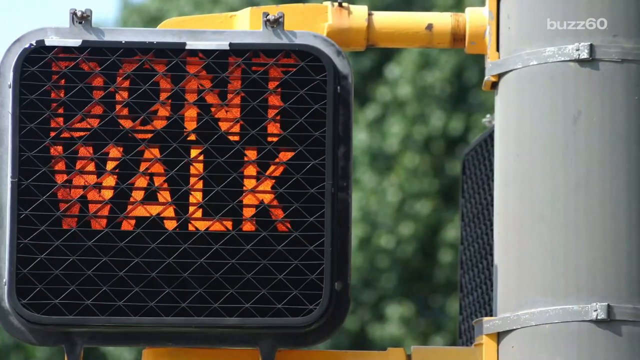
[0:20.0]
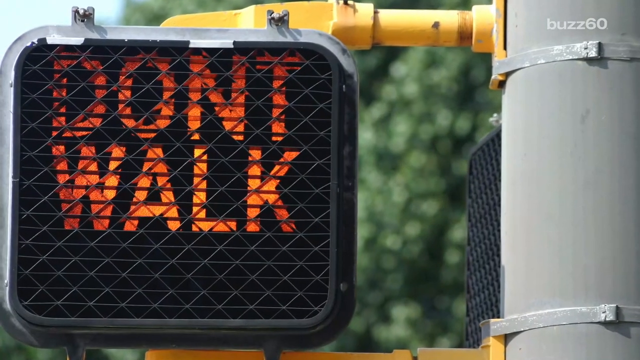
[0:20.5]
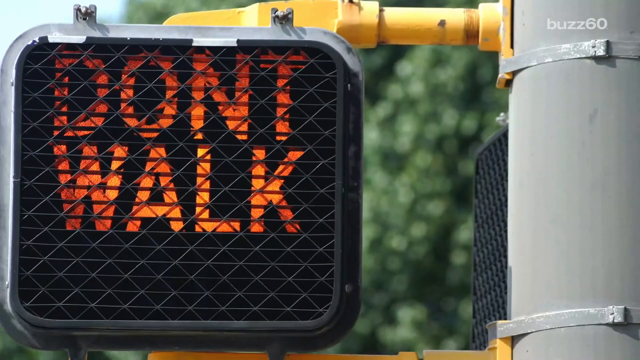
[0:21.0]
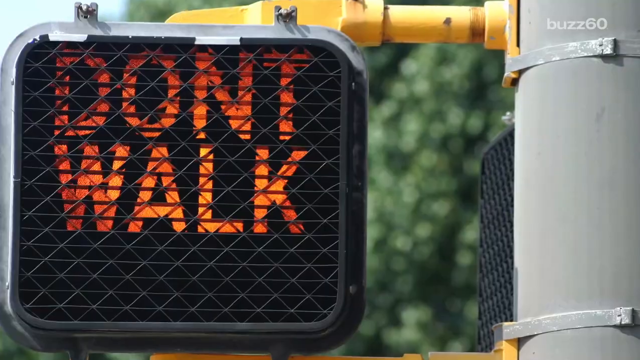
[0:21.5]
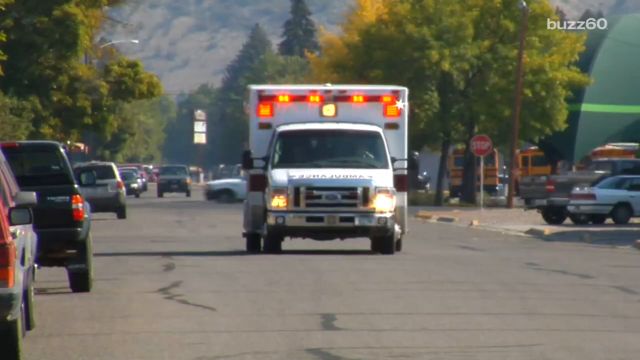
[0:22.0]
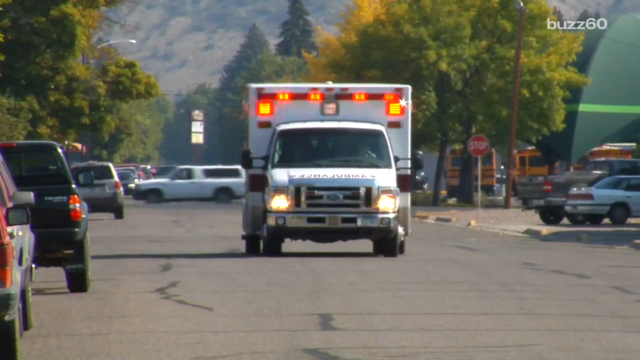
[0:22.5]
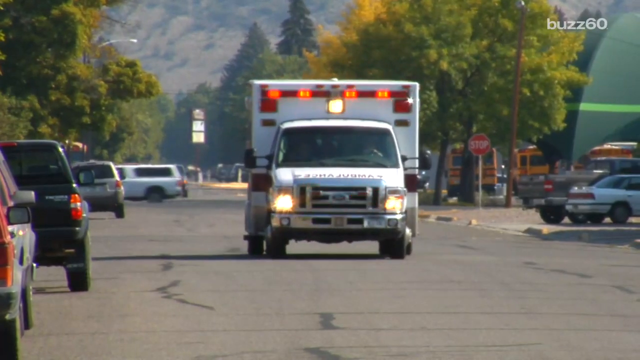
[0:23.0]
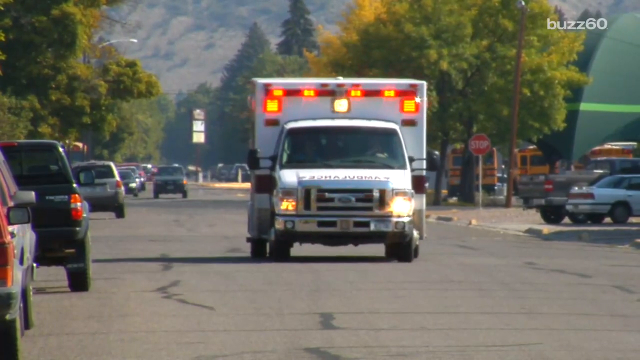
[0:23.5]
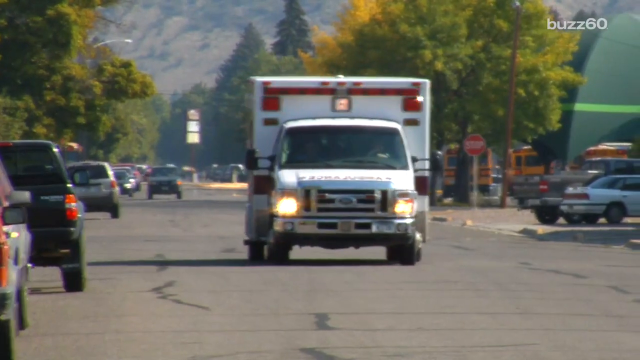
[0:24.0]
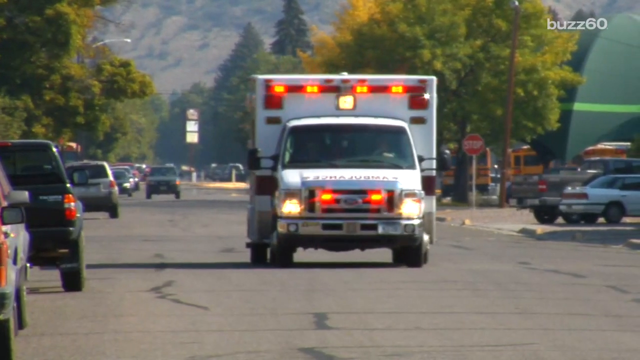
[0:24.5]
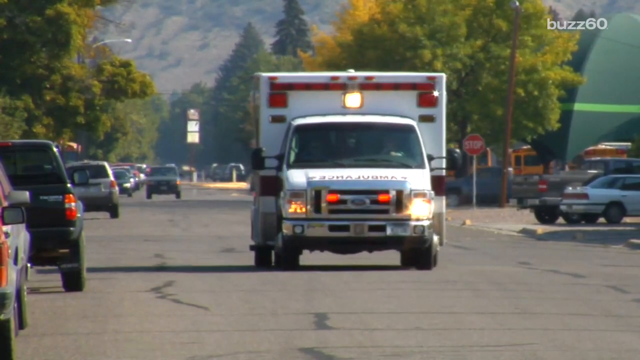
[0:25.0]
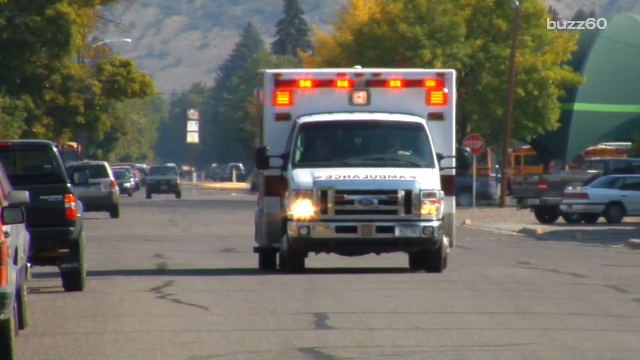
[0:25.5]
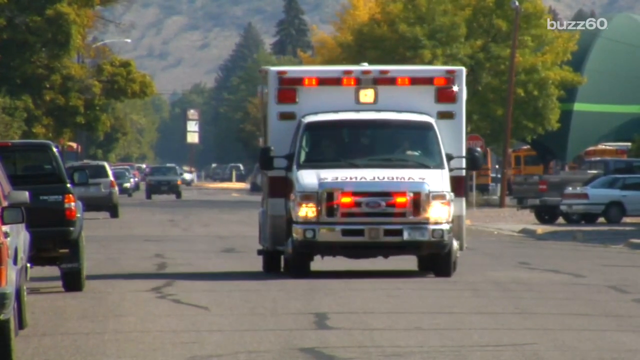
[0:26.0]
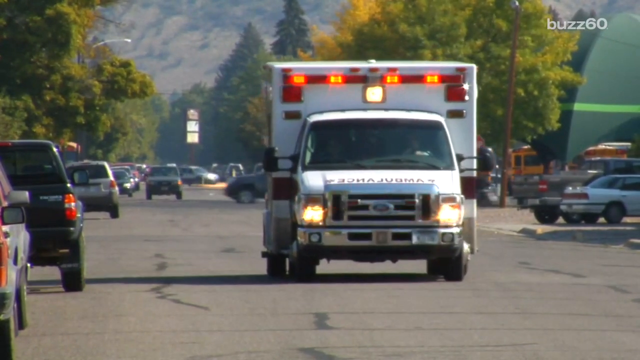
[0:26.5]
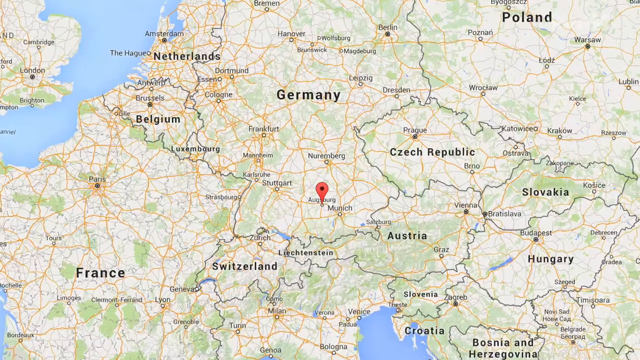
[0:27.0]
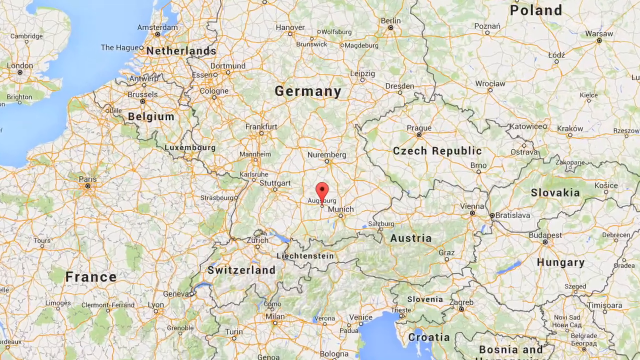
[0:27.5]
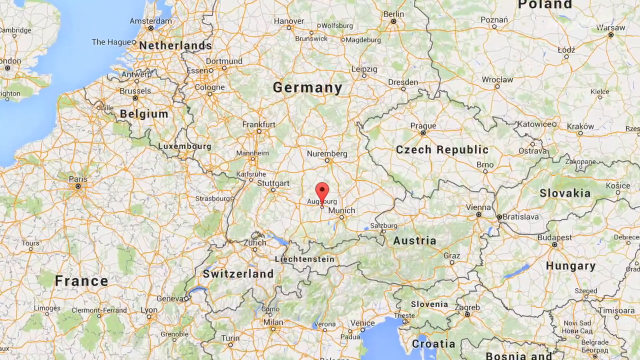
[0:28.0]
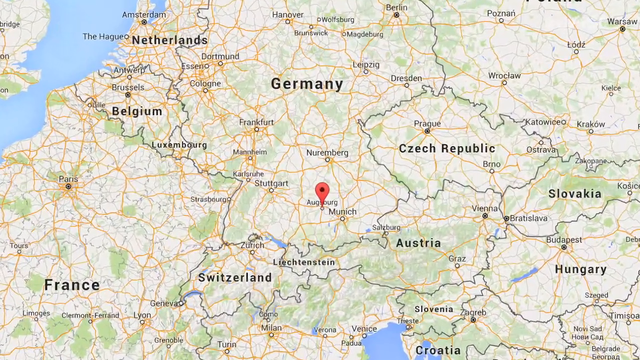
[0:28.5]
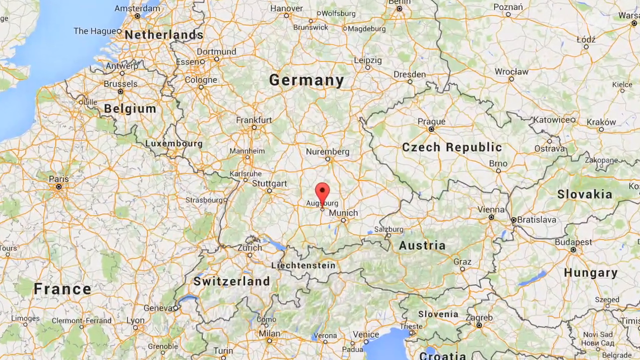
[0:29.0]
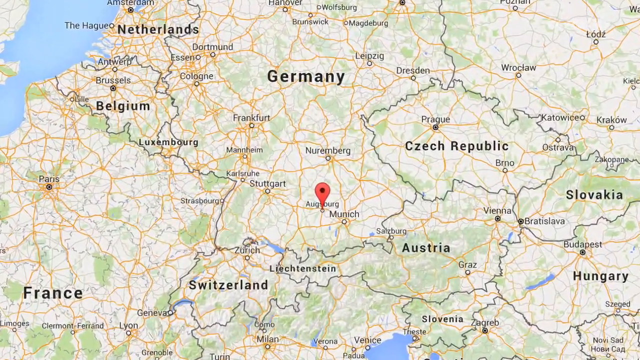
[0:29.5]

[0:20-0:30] A close-up shows the "don't walk" picture. An ambulance then drives toward the viewer, getting closer and closer, with many lights flashing and glowing all over it. The scene cuts to a map with a red marker in the middle; it reads "Germany" and shows surrounding areas around the marker, such as Germany and Switzerland.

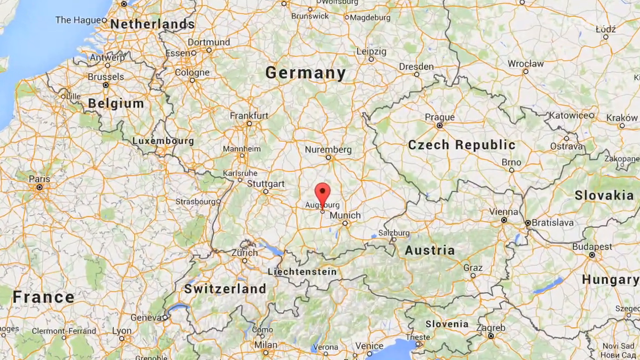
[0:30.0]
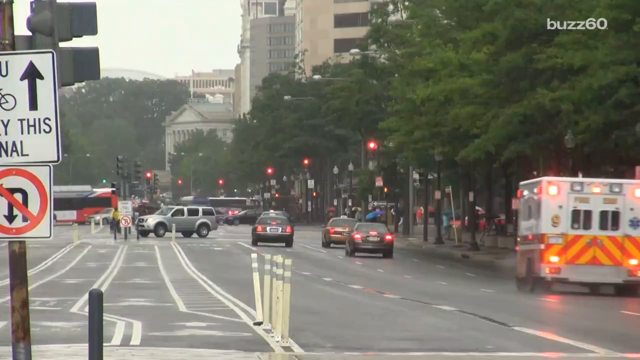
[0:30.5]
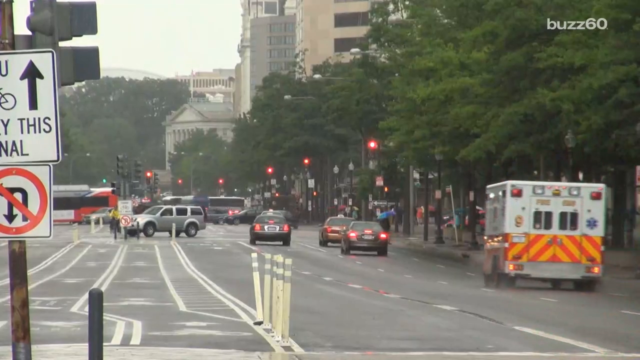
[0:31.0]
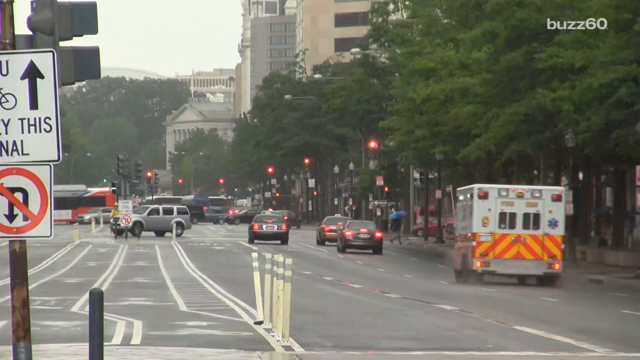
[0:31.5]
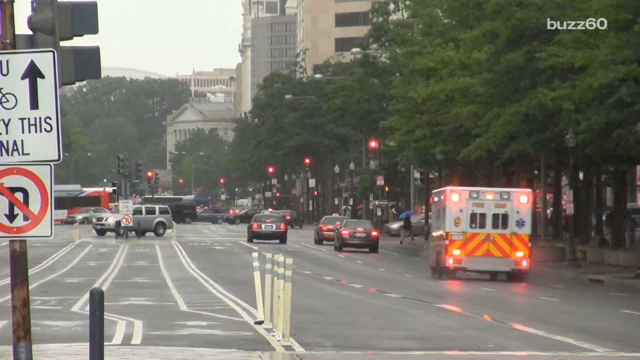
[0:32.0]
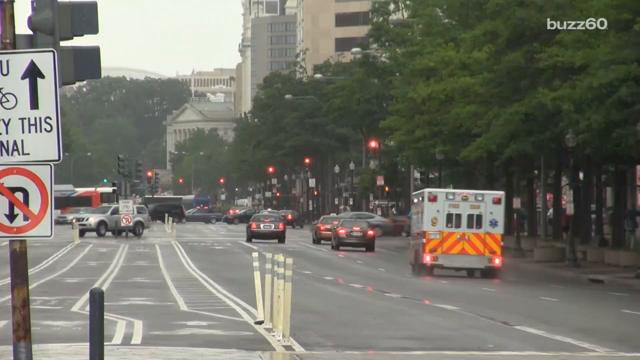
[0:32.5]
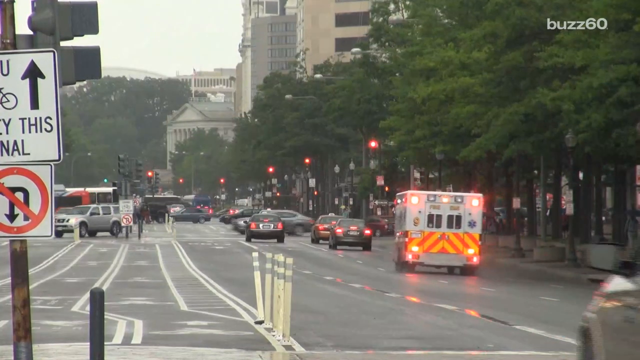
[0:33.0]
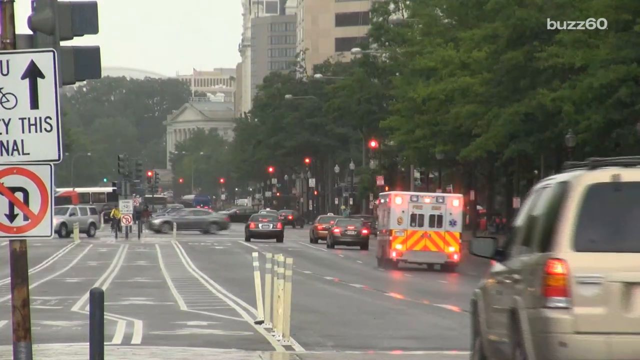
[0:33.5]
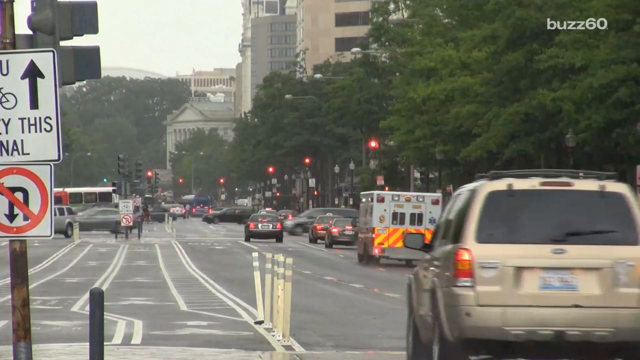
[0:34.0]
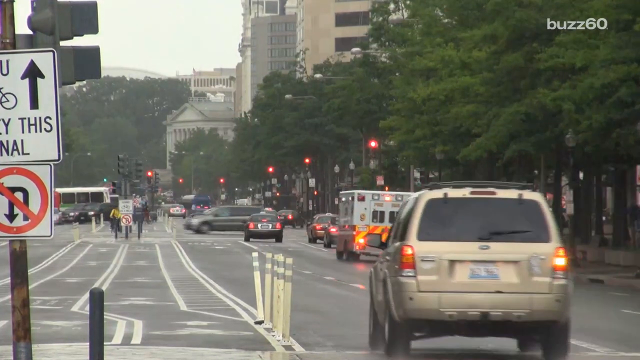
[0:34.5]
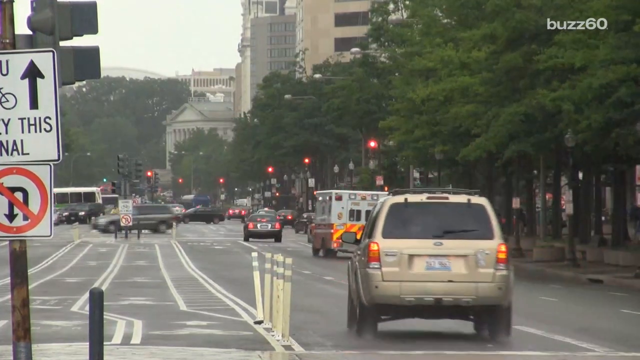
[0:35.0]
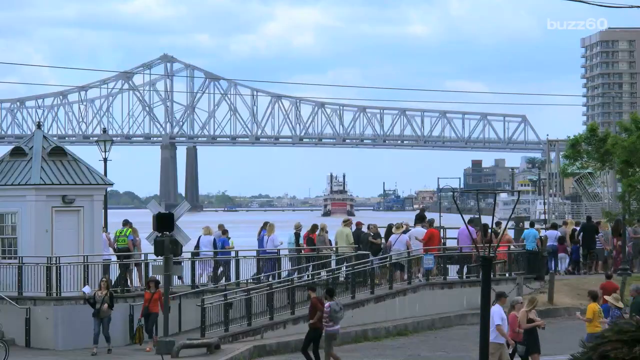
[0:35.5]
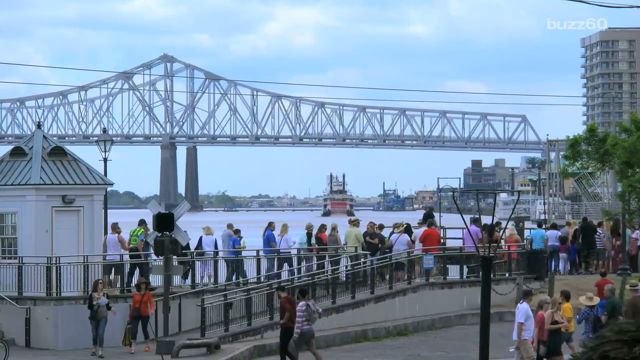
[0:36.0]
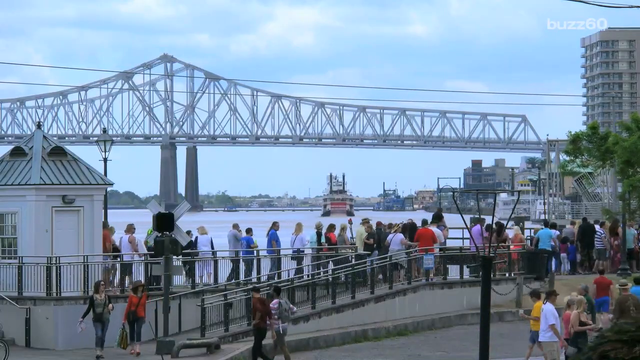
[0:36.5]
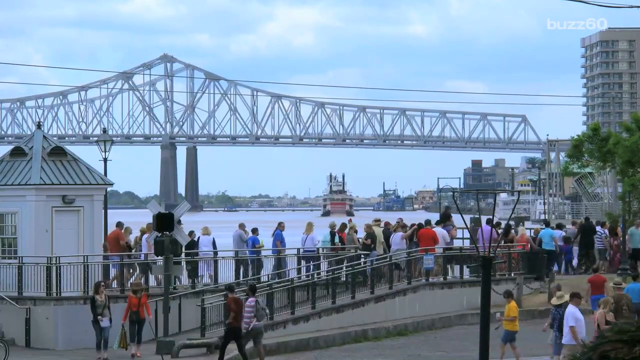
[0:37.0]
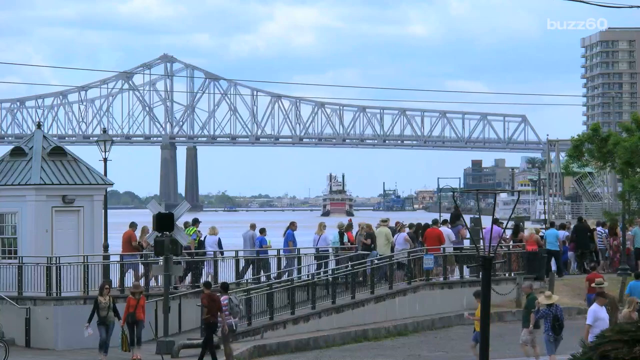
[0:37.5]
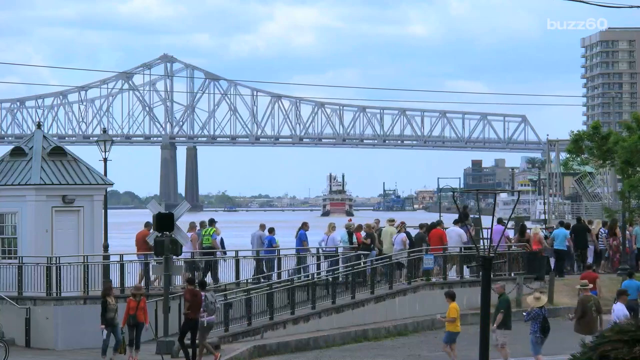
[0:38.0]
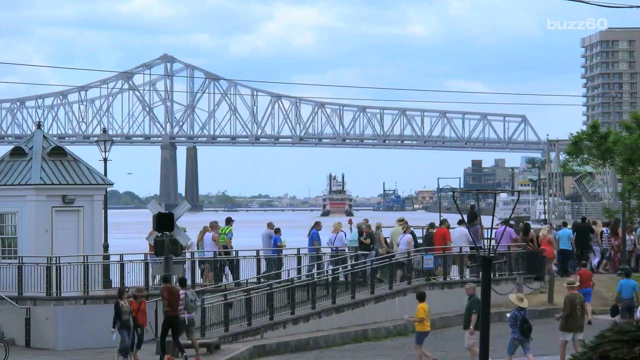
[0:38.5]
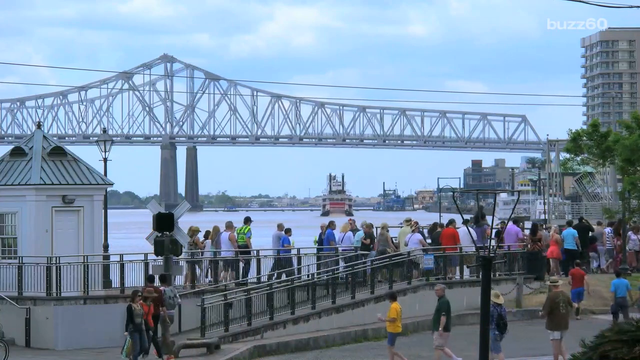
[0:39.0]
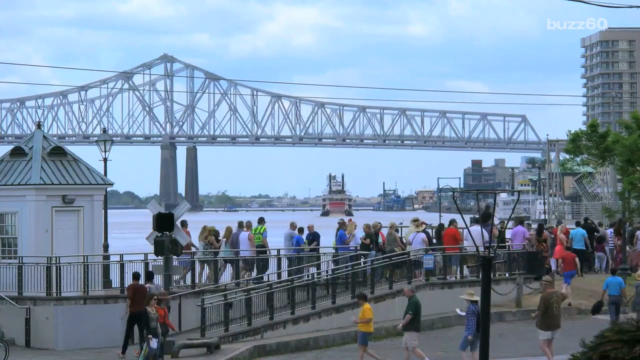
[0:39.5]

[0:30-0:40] The map continues, showing areas such as the Czech Republic, Belgium, the Netherlands, Slovakia and Hungary. An ambulance then drives across the street, coming up to a four-way intersection under a very cloudy sky, while some other cars drive by away from the viewer. Next comes a giant, very big metal bridge, with a group of people in the foreground standing there taking in the view, probably taking pictures and video.